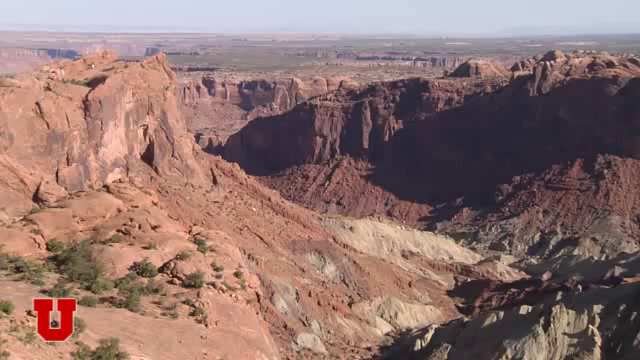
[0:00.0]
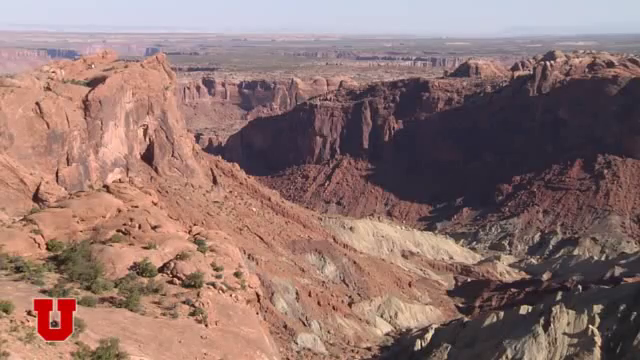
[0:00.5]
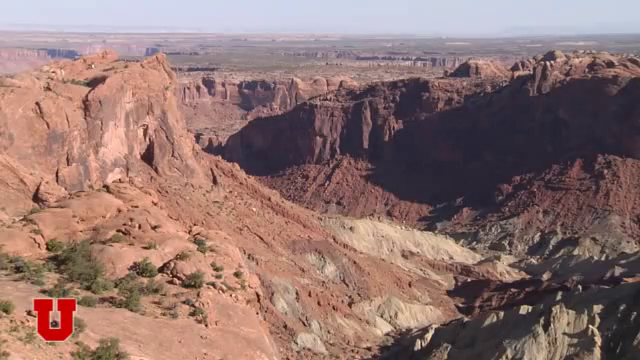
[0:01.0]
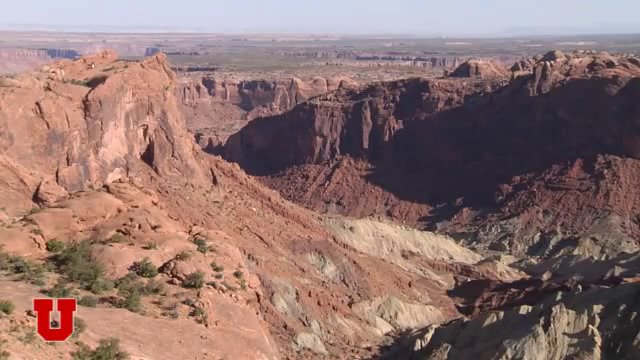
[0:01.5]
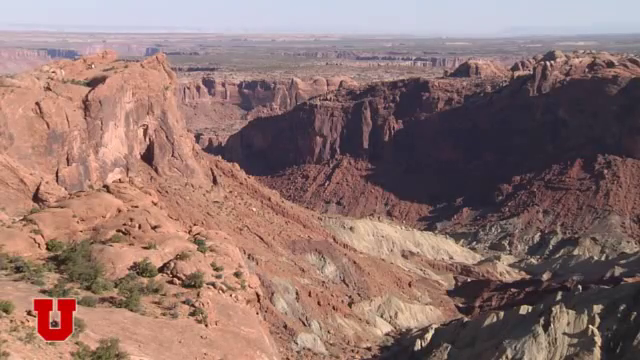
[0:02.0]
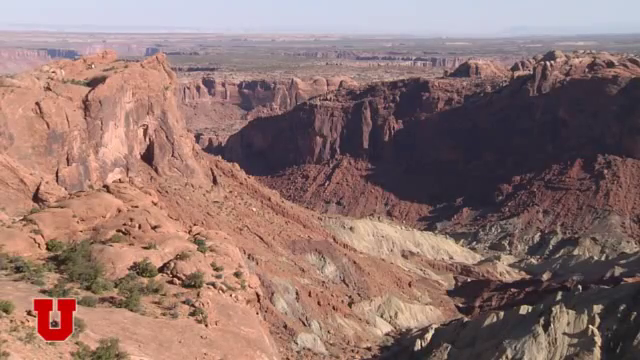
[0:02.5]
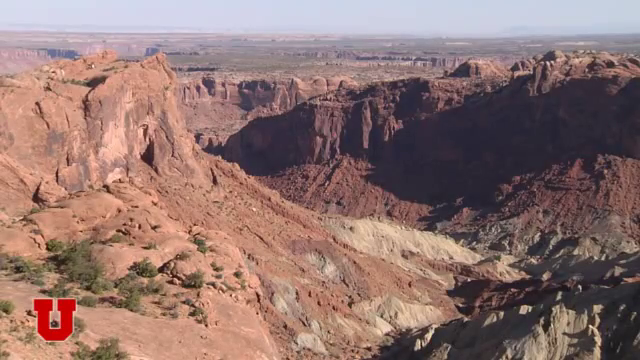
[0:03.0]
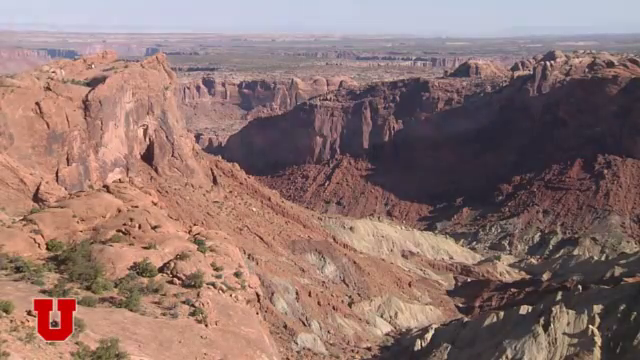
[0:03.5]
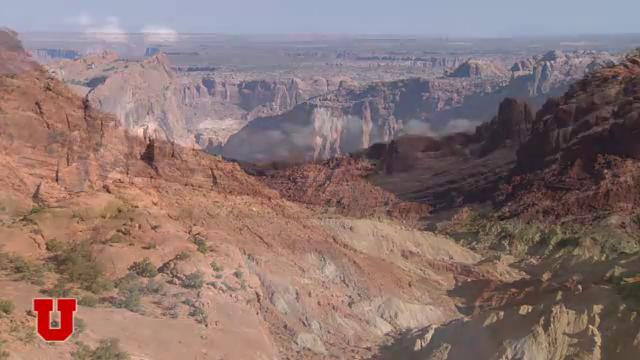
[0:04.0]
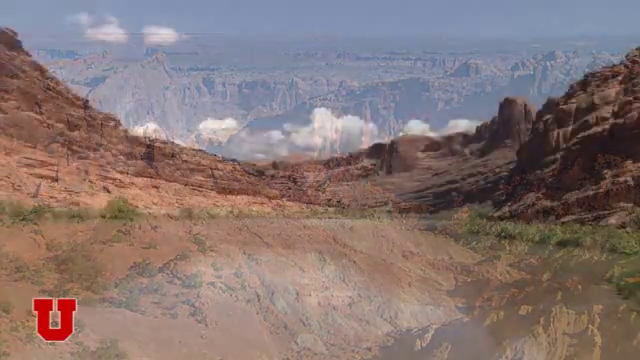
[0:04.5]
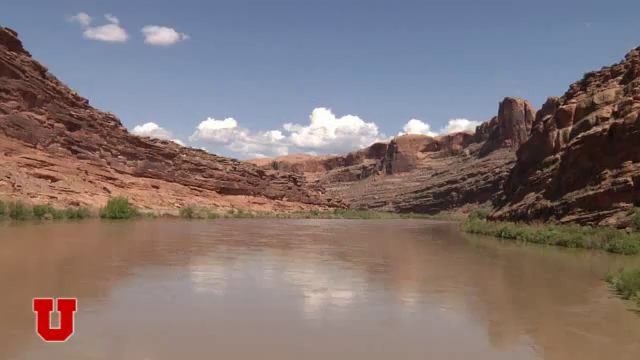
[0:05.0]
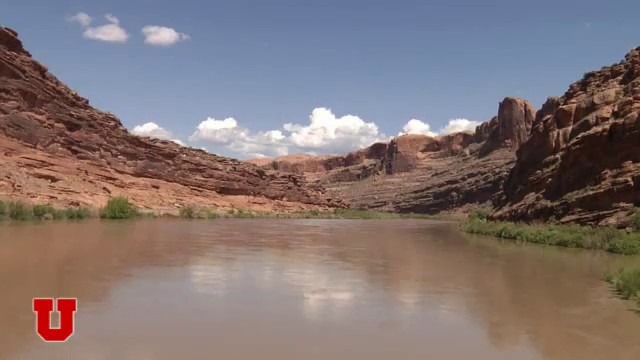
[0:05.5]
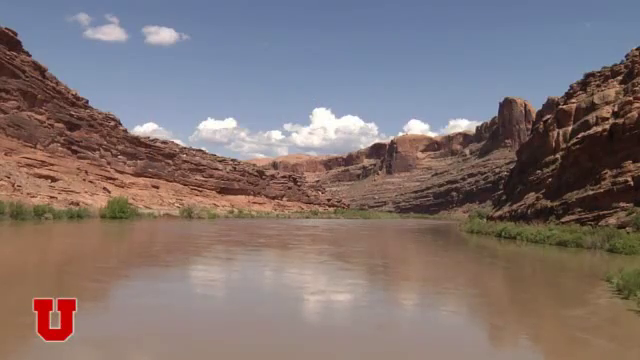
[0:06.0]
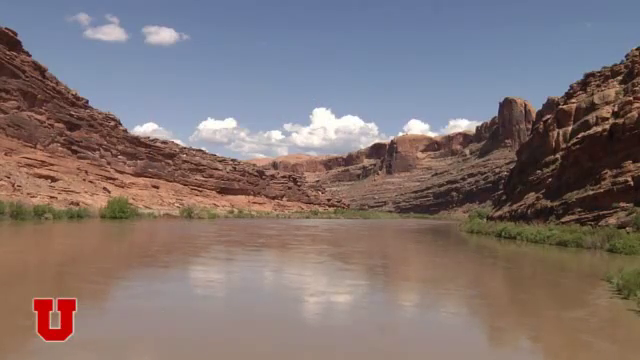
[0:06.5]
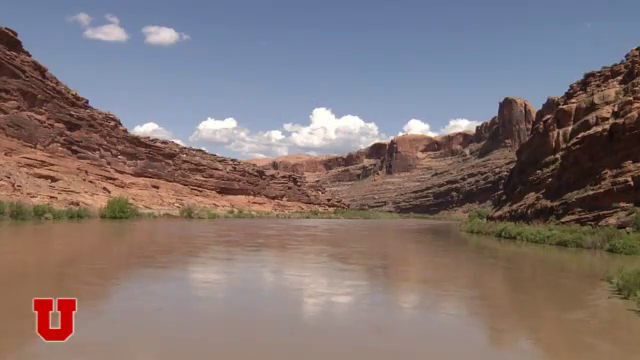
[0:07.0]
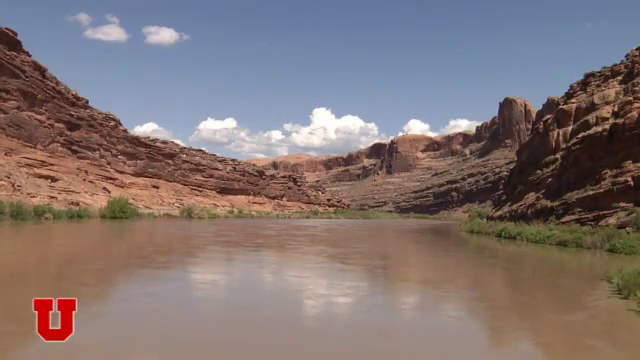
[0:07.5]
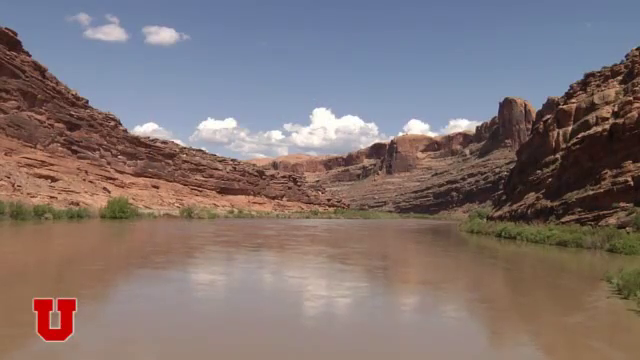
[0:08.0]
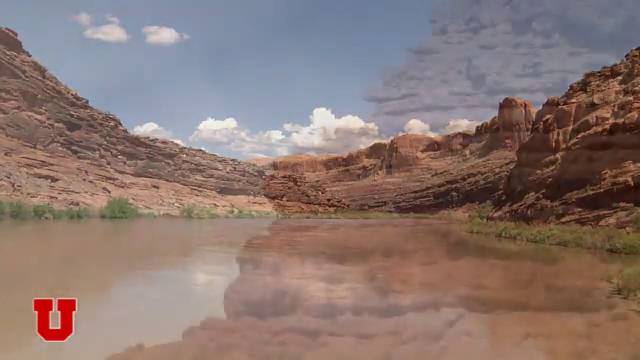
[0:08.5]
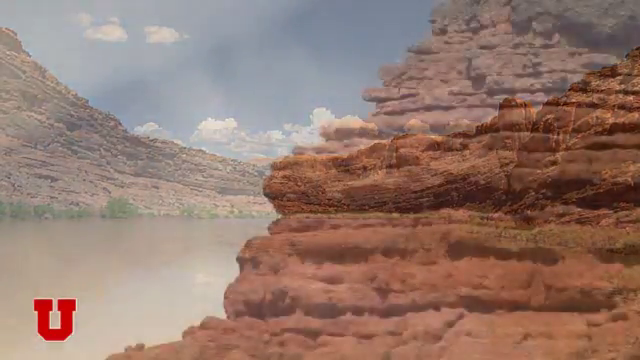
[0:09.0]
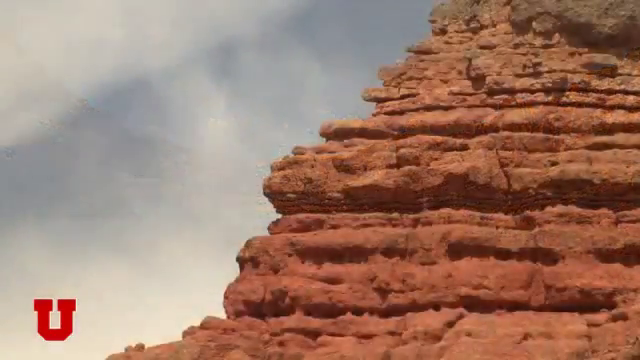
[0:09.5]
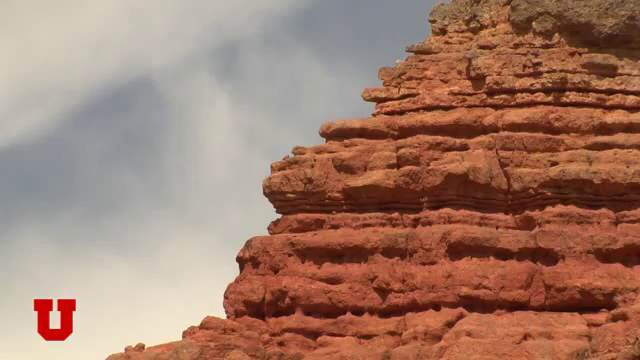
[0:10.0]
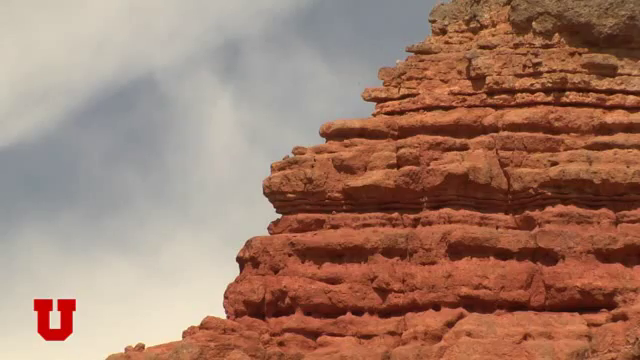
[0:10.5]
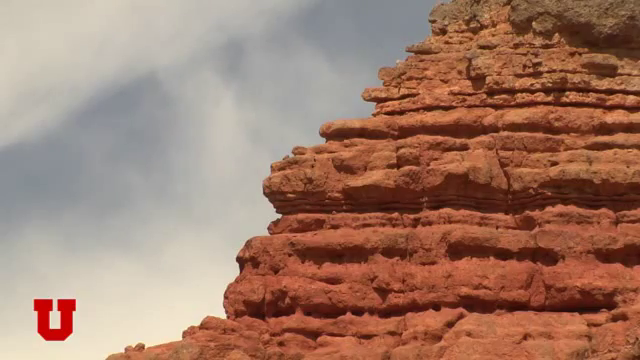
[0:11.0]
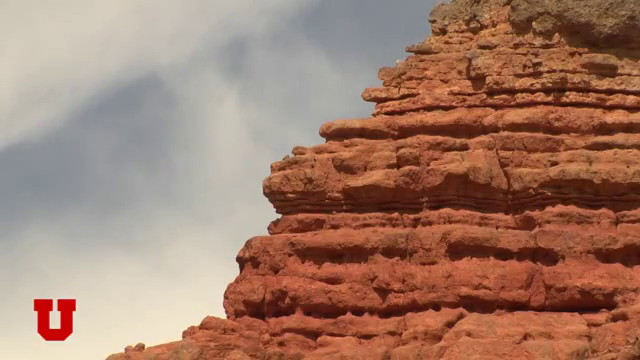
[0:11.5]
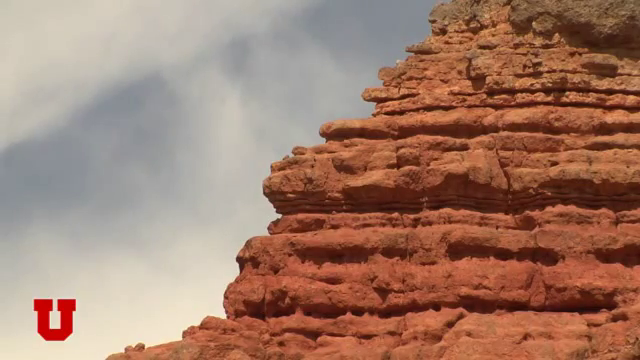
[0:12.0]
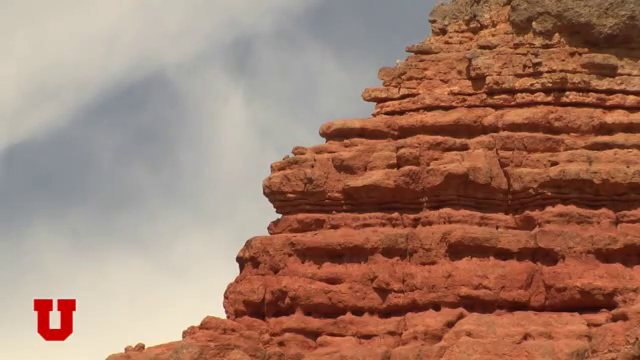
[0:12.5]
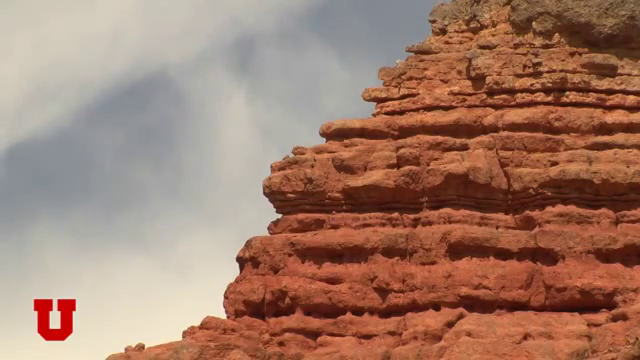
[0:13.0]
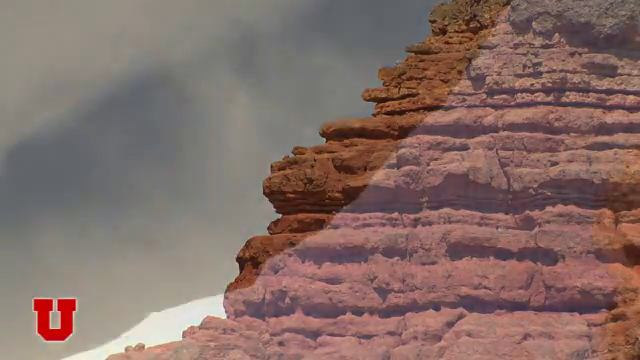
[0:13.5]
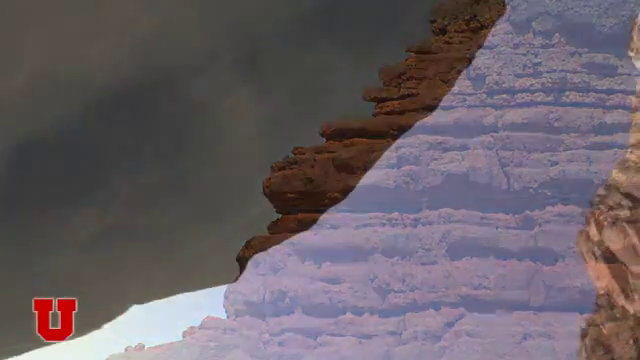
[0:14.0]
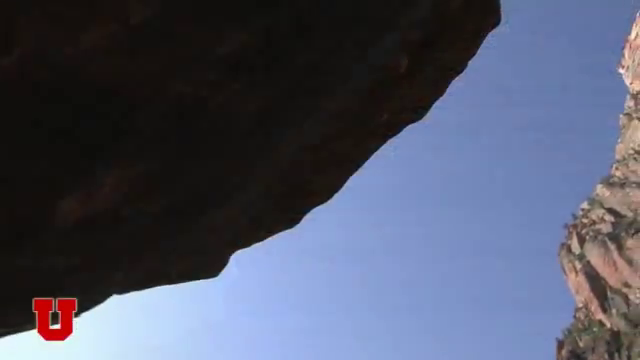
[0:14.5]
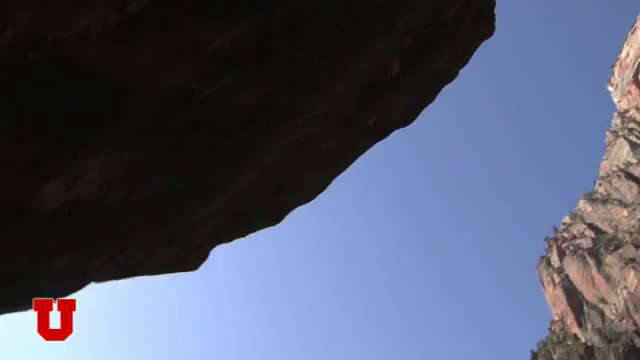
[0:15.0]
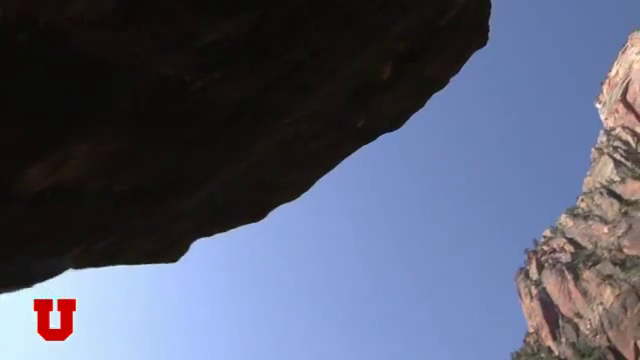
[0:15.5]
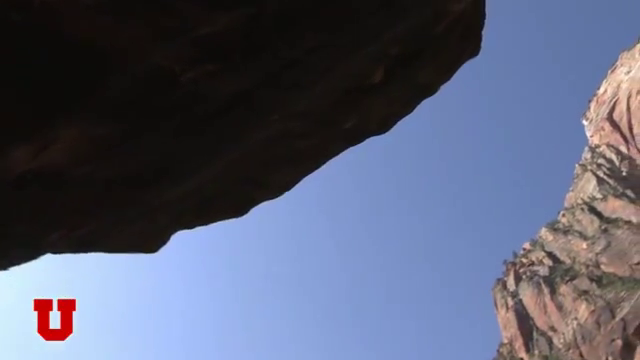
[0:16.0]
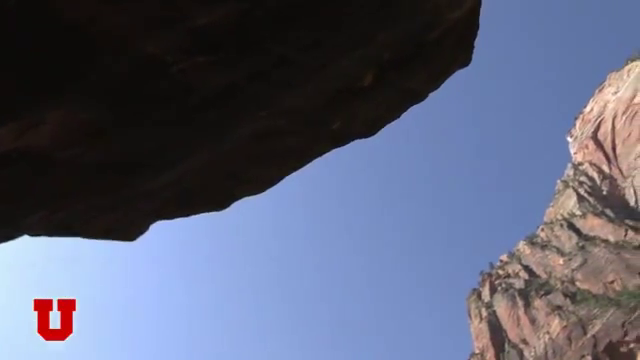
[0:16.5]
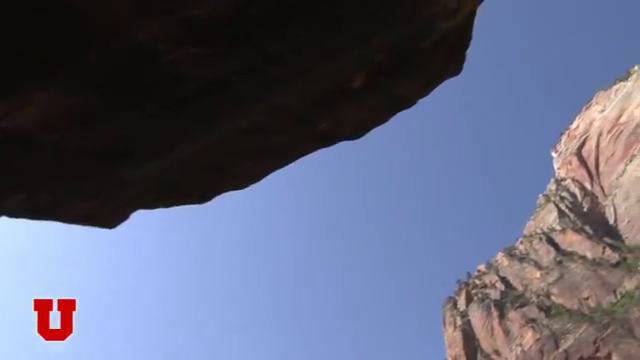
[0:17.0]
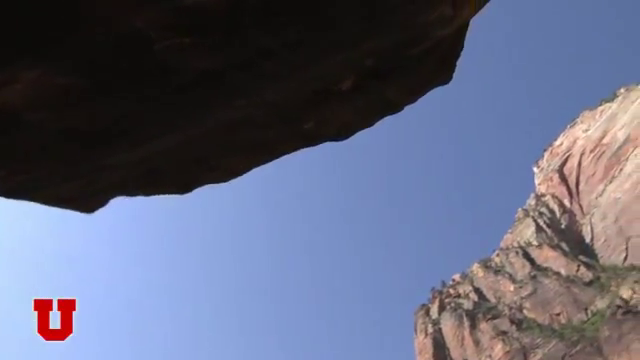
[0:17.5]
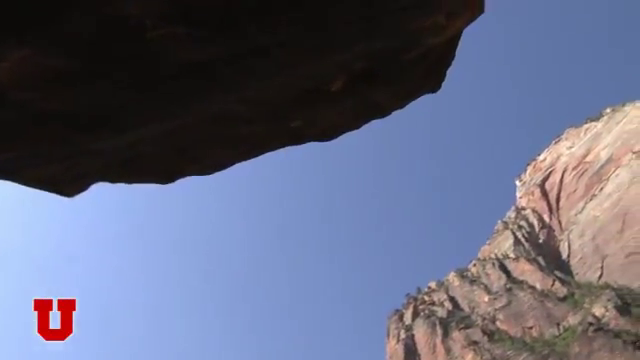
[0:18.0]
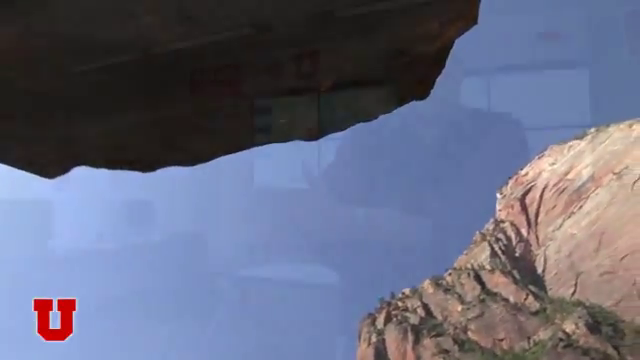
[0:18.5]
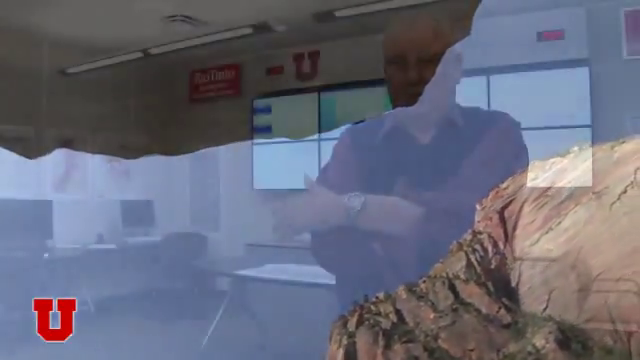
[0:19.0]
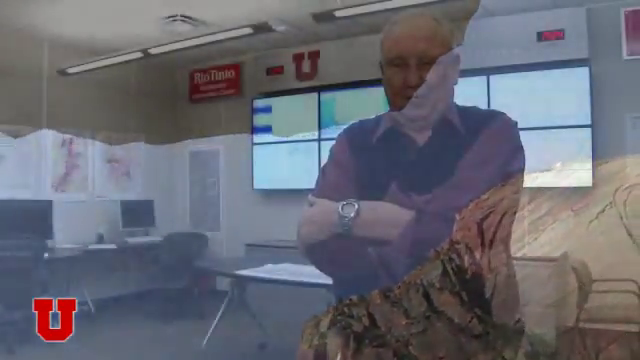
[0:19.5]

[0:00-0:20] Pictures of a desert appear, with a little red U down in the corner and no text. The images show brown and red-brown rock formations with scattered shrubbery from different angles. The first image looks across what might be a canyon, and at one point the face of a rock cliff wall fills the view. There are no people and no context for where the place is. The sequence ends with a brief shot of an older white man with white hair and glasses.